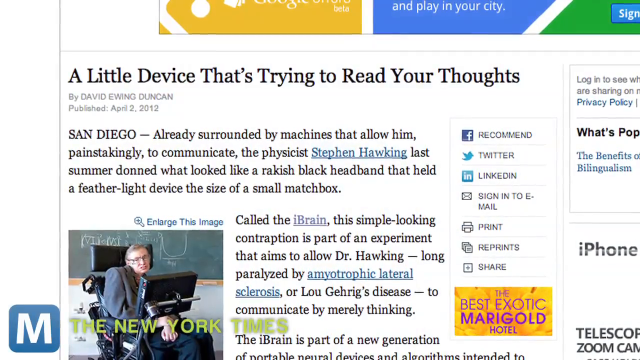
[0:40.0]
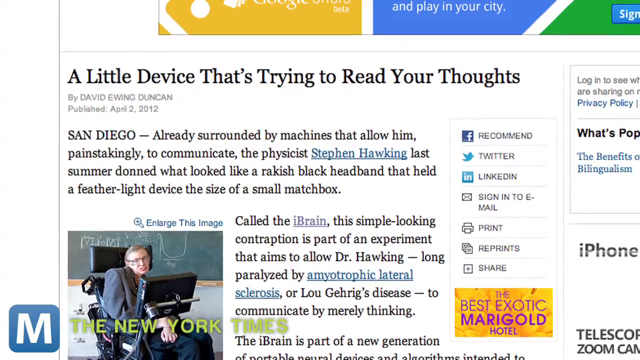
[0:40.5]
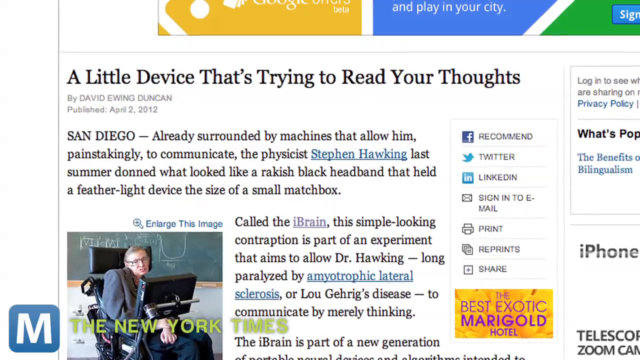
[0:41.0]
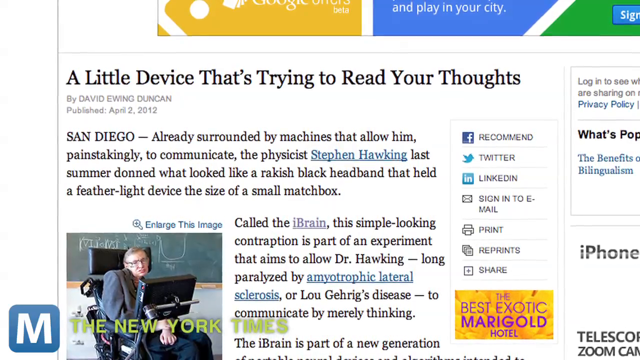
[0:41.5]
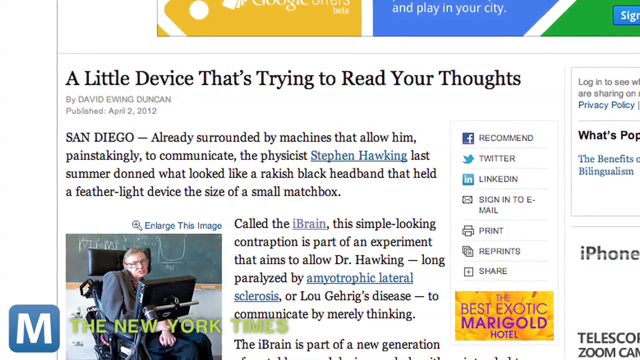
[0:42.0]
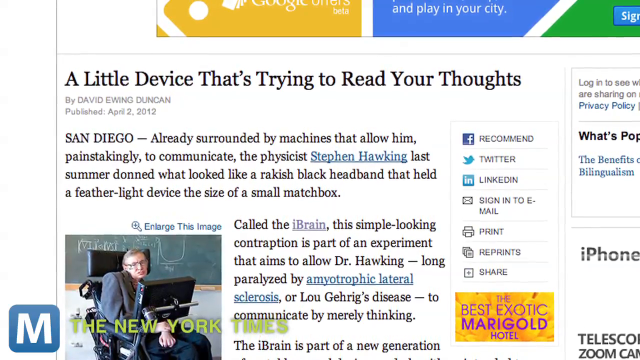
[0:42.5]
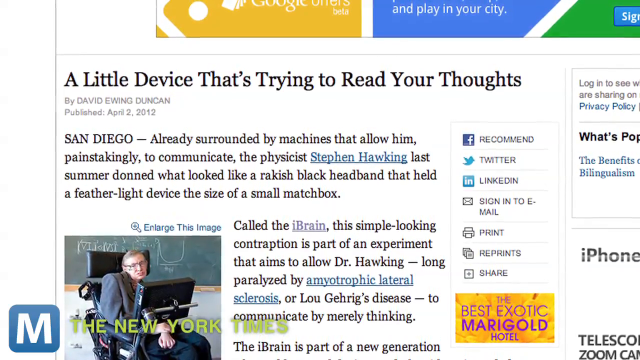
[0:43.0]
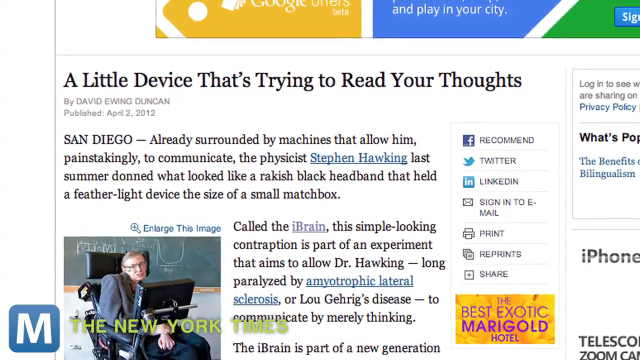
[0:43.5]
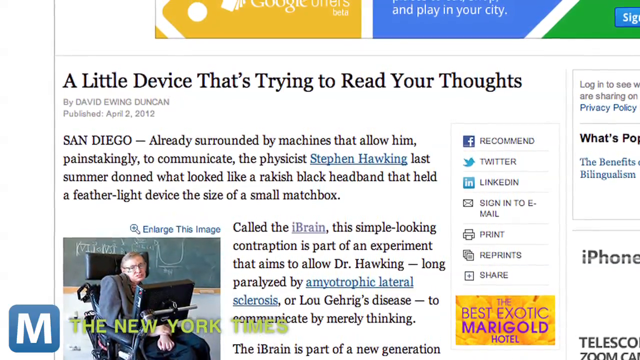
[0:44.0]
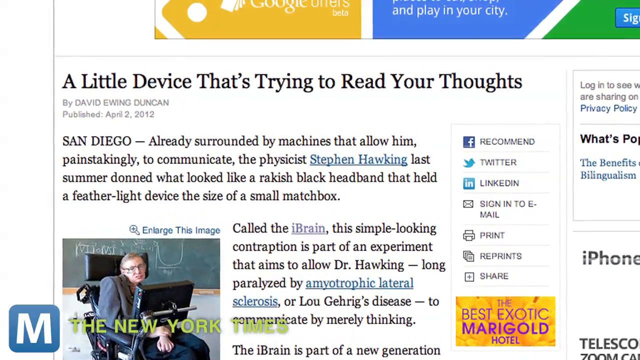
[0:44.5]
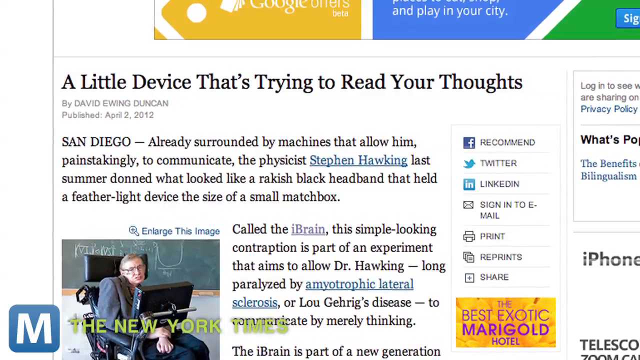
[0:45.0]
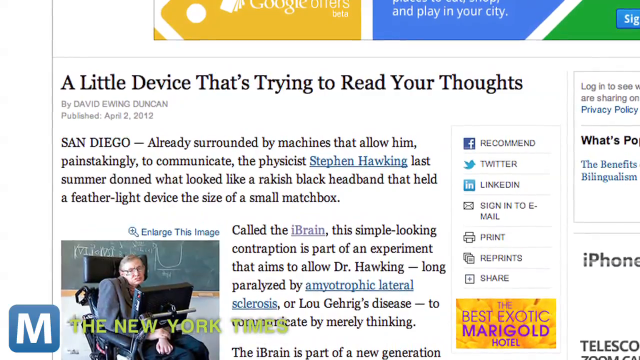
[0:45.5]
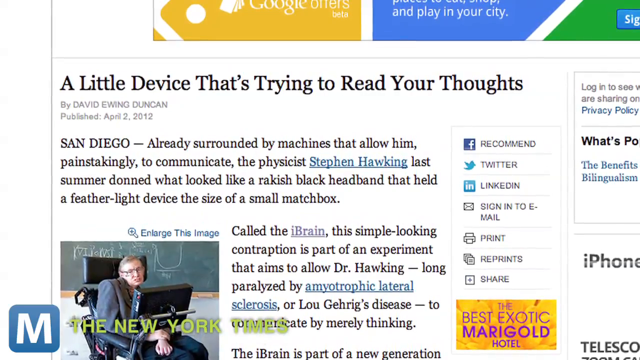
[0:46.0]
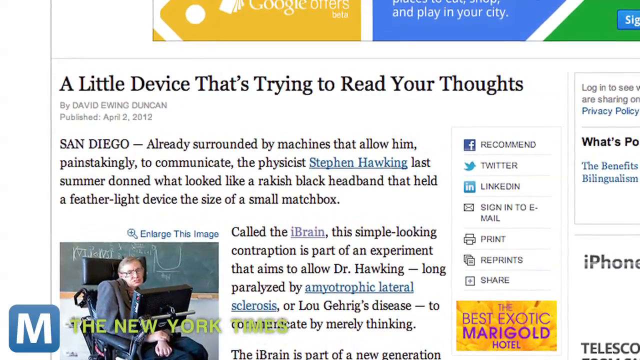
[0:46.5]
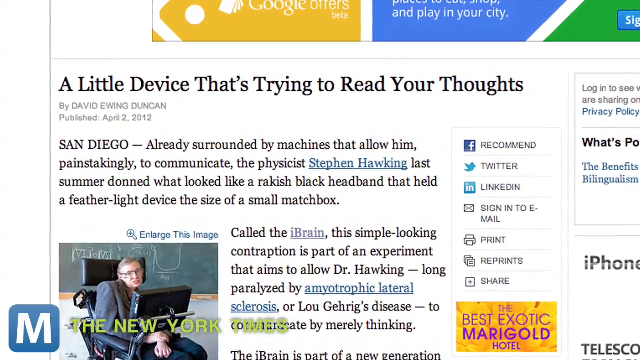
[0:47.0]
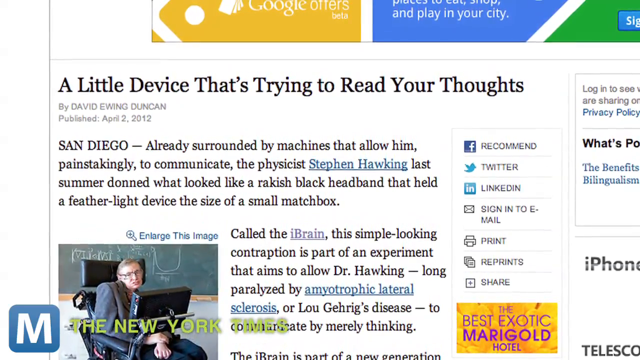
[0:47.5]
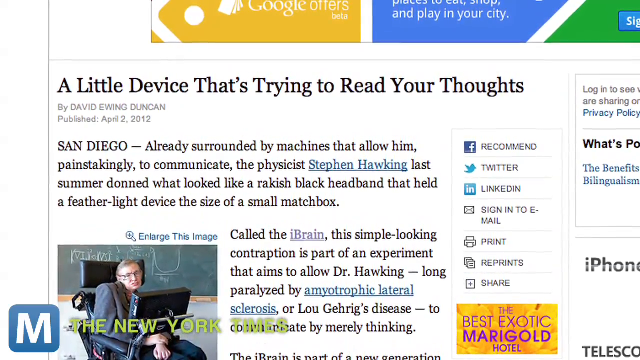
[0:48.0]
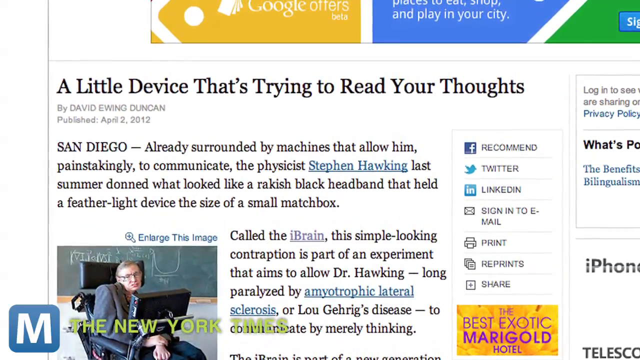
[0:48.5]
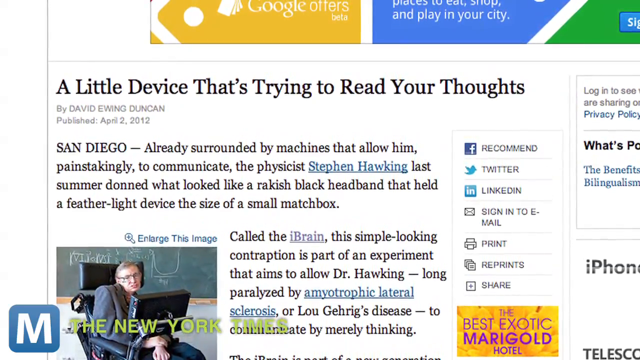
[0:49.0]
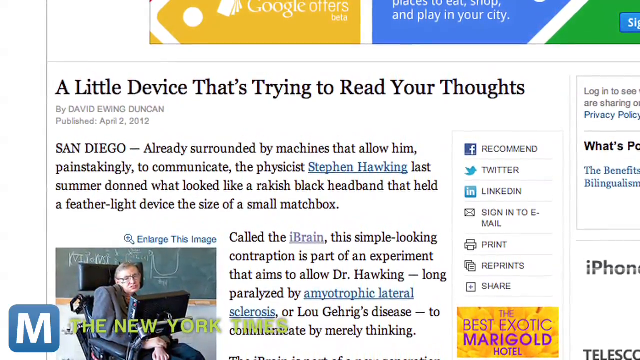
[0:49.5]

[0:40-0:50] An image of an article titled "A little device that's trying to read your thoughts" by David Ewing Duncan, published April 2nd, 2012, fills the view; the article comes from San Diego. According to the byline, the article appears to be about a brain scanning device that Stephen Hawking wore recently. The view zooms into the article slowly and slightly. The article reads: "Already surrounded by machines that allow him, painstakingly, to communicate, the physicist Stephen Hawking last summer donned what looked like a rakish black headband that held a feather-like device the size of a small matchbox. Called the iBrain, this simple-looking contraption is part of an experiment that aims to allow Dr. Hawking, long paralyzed by amyotrophic lateral sclerosis, or Lou Gehrig's disease, to communicate by merely thinking." On the left-hand side of the article is an image of Stephen Hawking in a wheelchair.